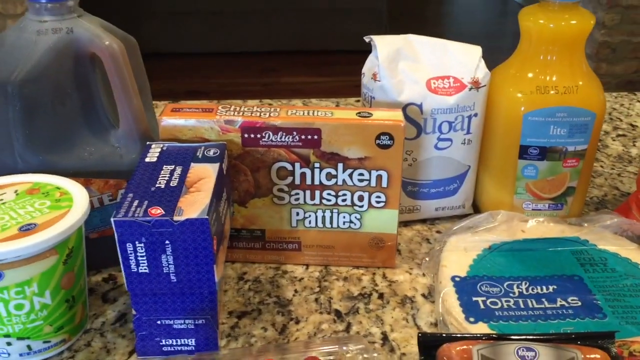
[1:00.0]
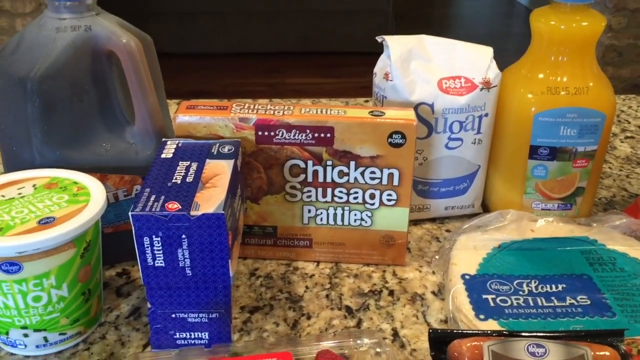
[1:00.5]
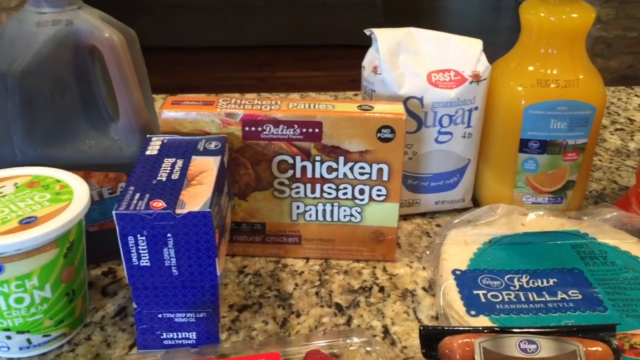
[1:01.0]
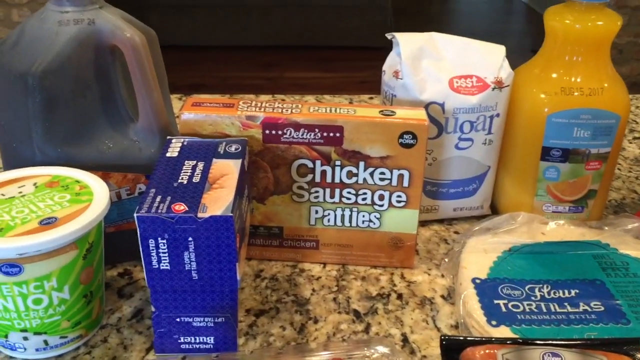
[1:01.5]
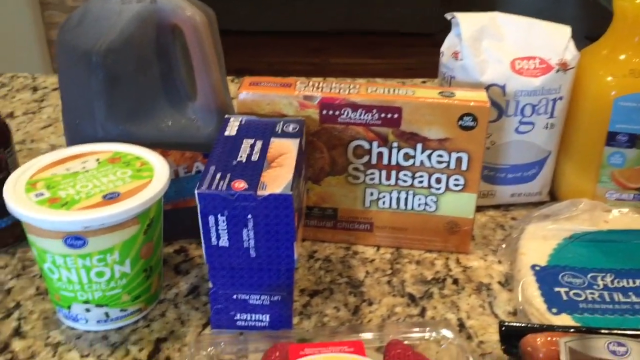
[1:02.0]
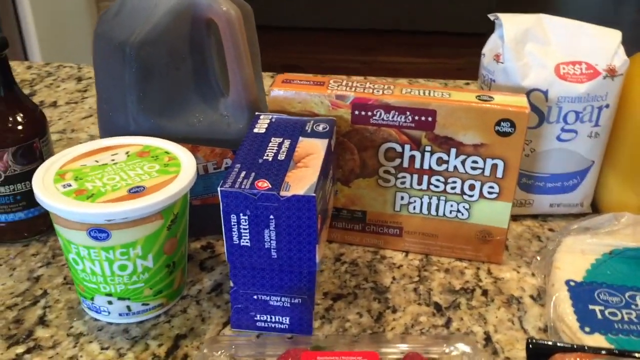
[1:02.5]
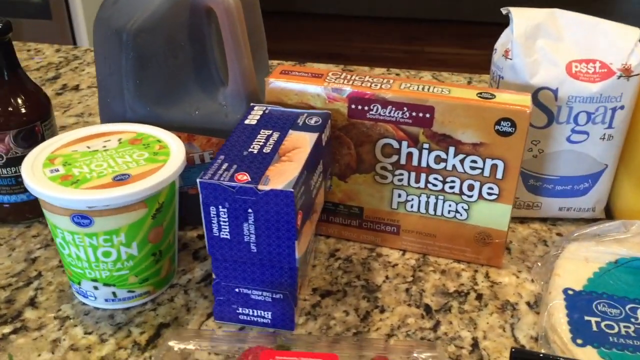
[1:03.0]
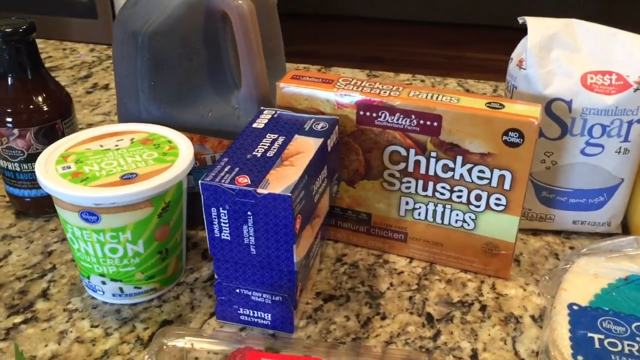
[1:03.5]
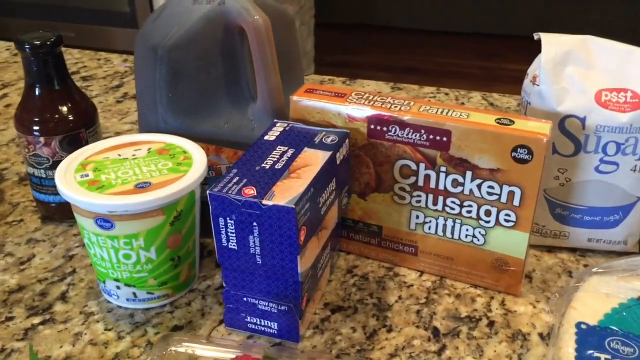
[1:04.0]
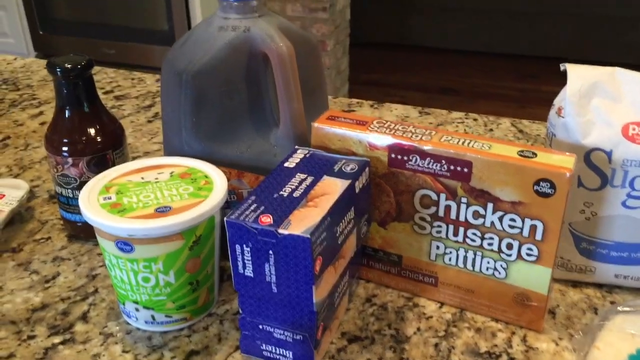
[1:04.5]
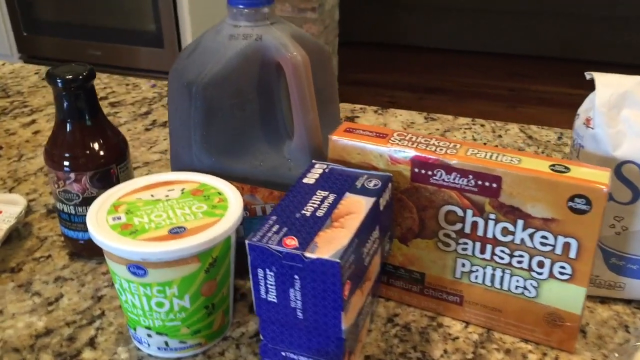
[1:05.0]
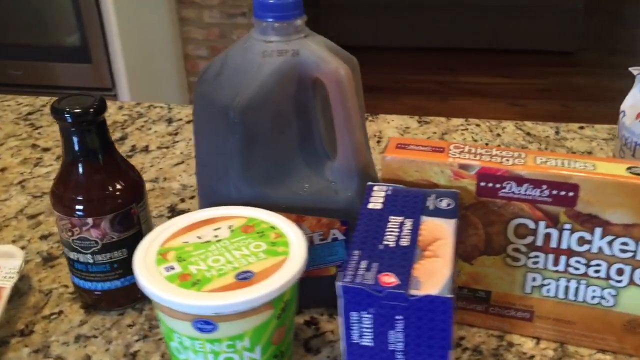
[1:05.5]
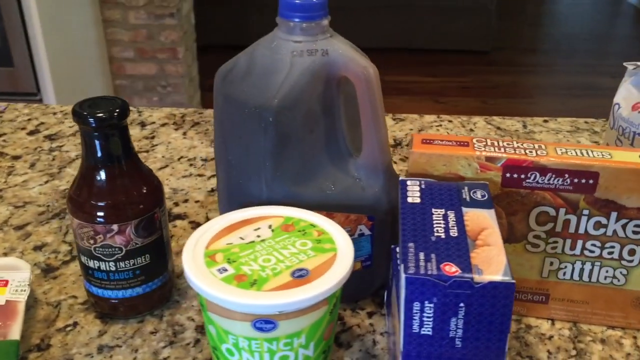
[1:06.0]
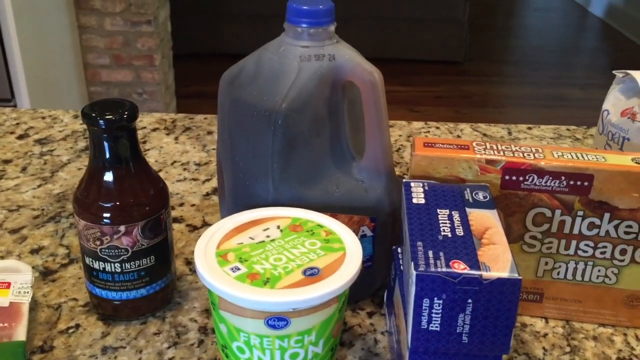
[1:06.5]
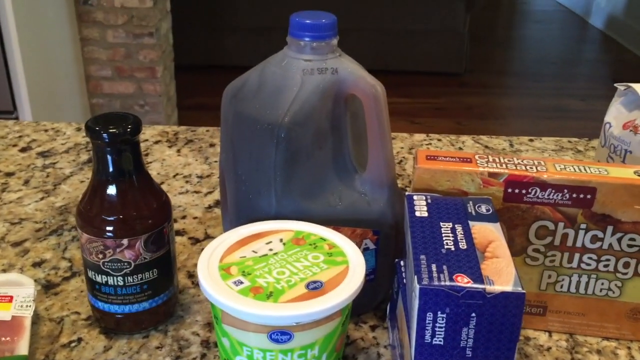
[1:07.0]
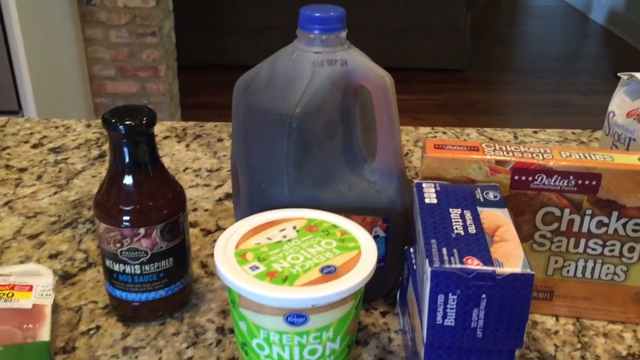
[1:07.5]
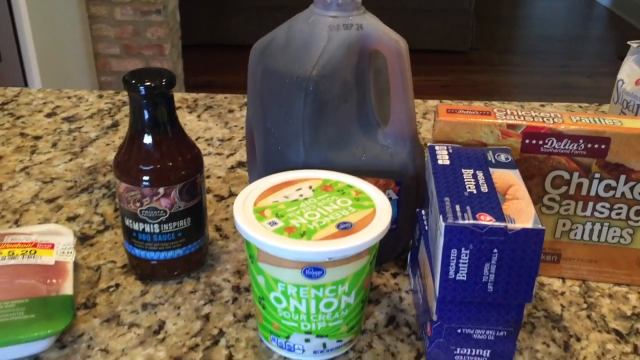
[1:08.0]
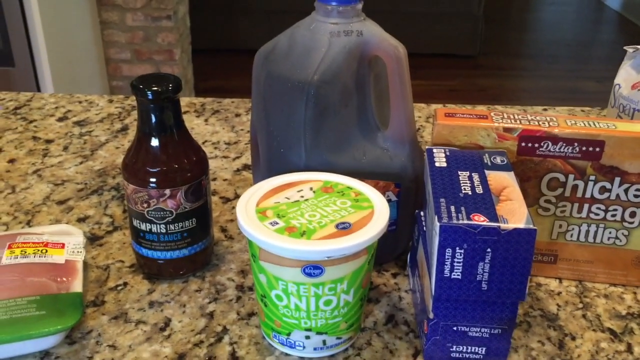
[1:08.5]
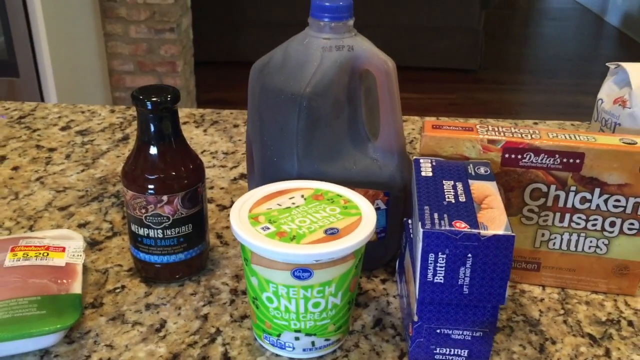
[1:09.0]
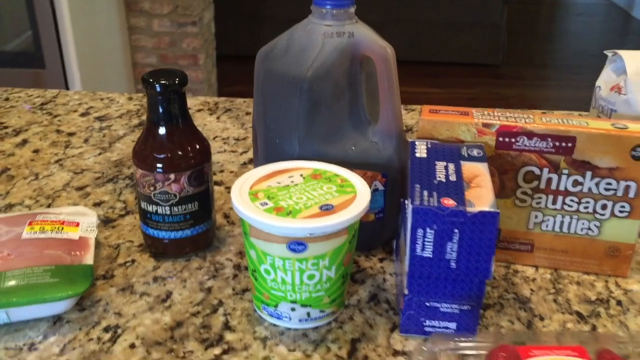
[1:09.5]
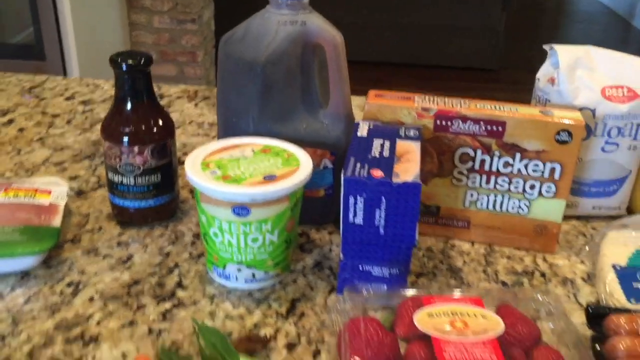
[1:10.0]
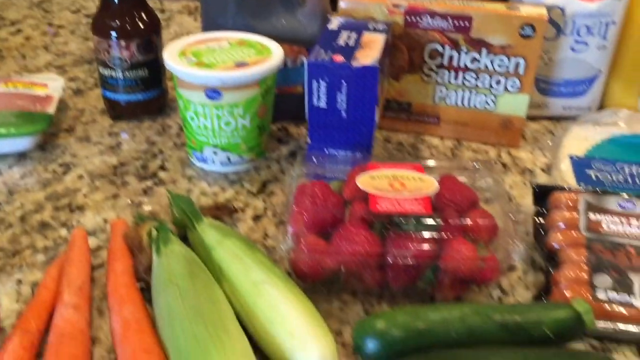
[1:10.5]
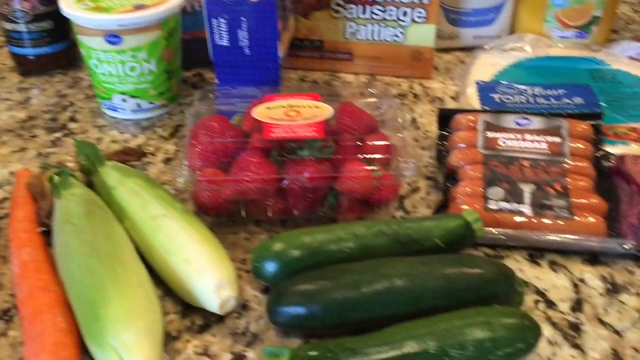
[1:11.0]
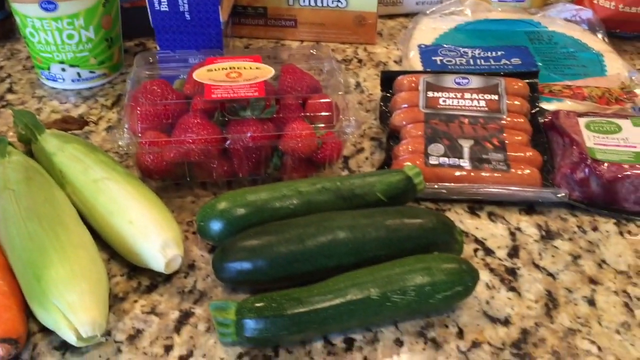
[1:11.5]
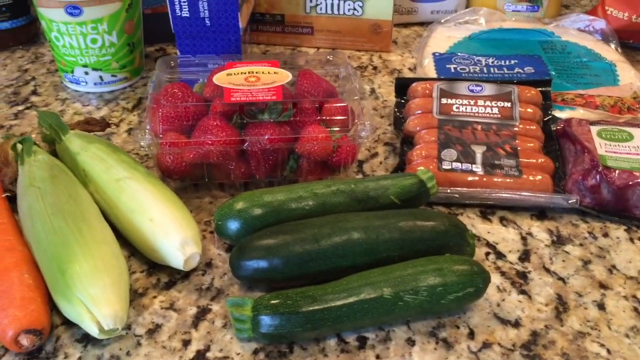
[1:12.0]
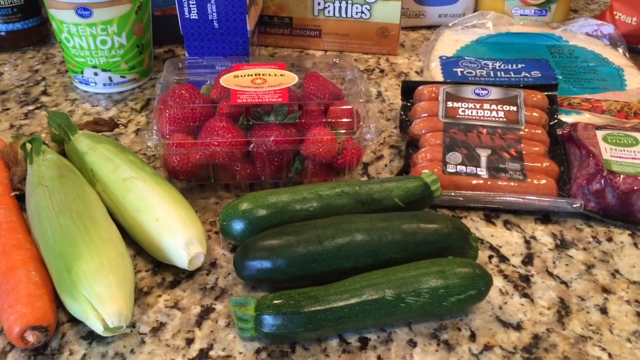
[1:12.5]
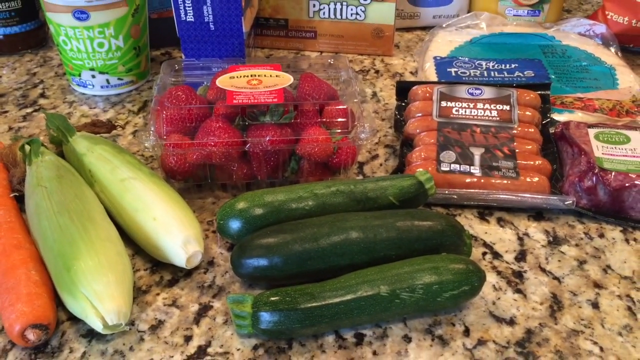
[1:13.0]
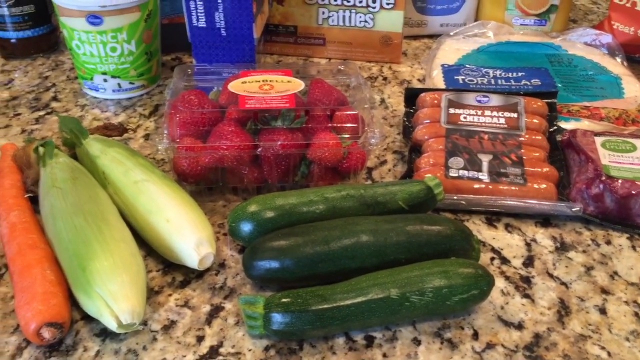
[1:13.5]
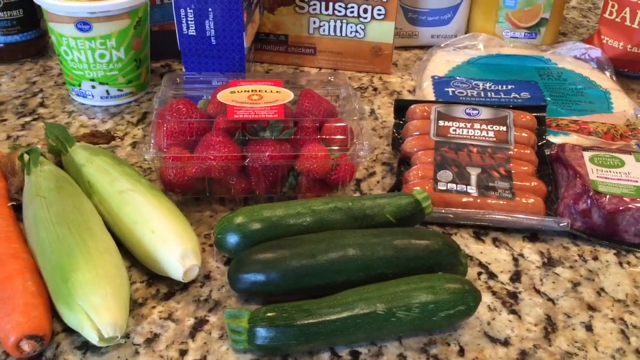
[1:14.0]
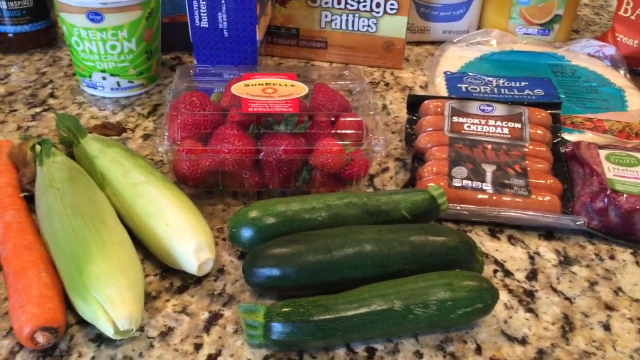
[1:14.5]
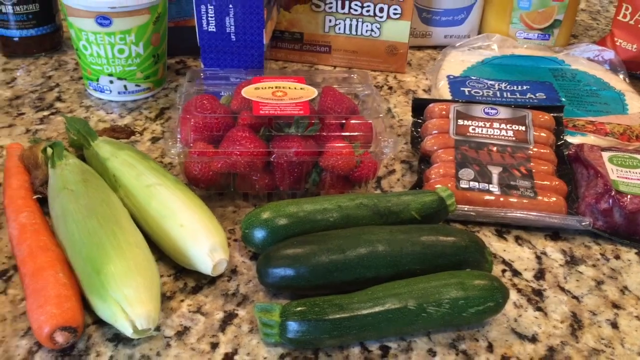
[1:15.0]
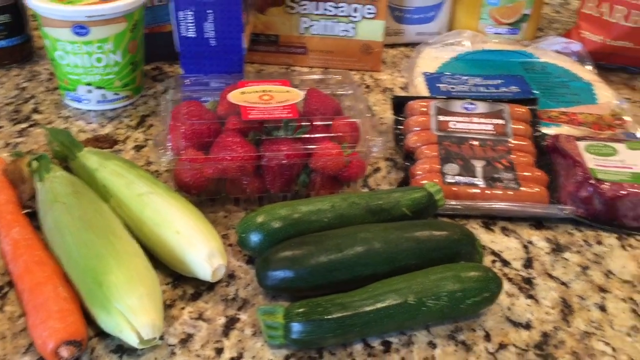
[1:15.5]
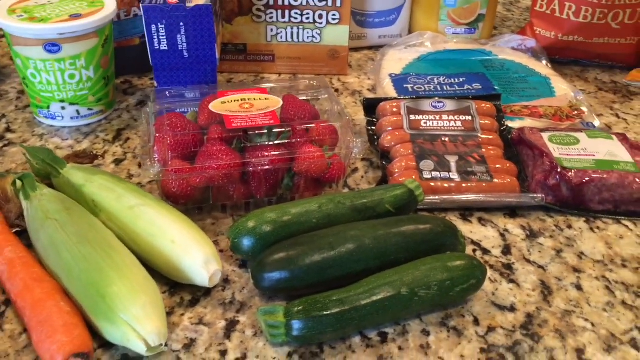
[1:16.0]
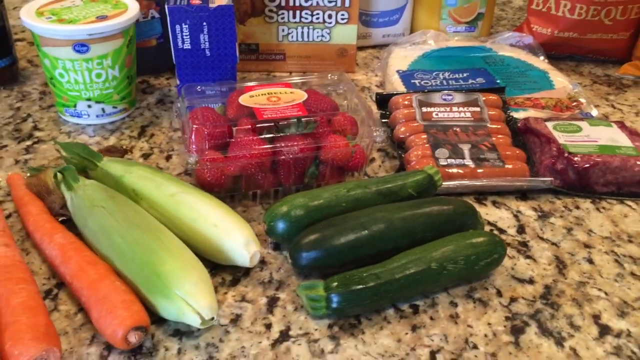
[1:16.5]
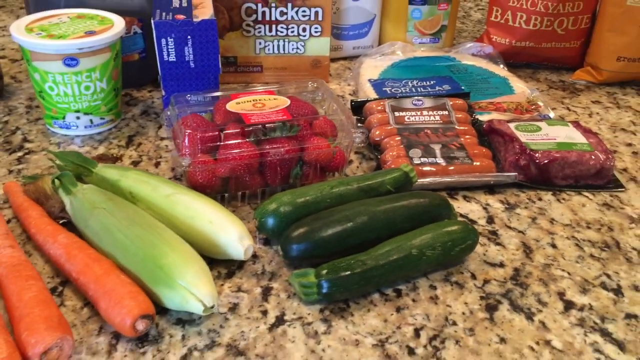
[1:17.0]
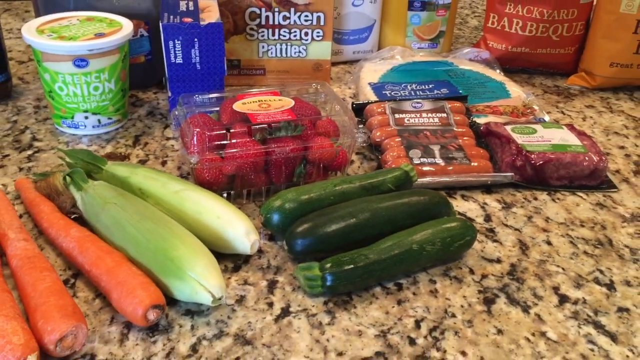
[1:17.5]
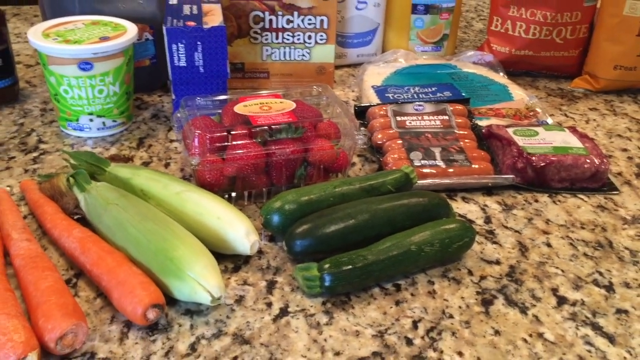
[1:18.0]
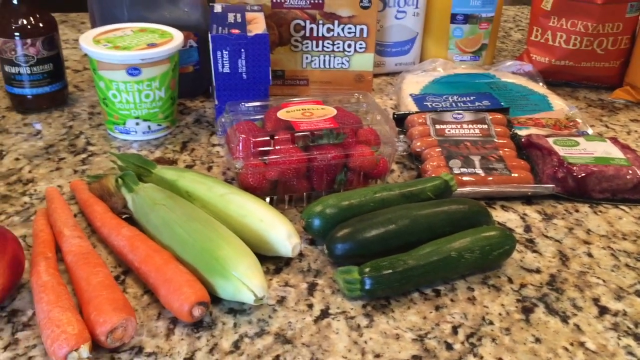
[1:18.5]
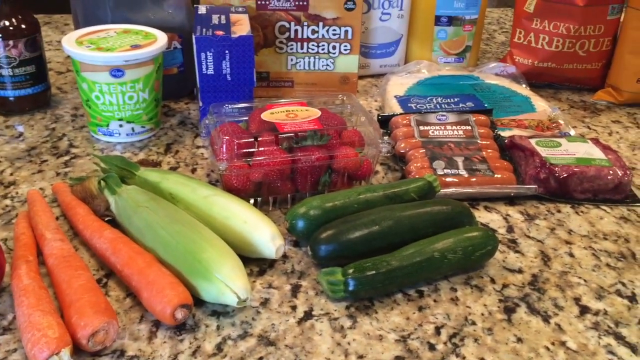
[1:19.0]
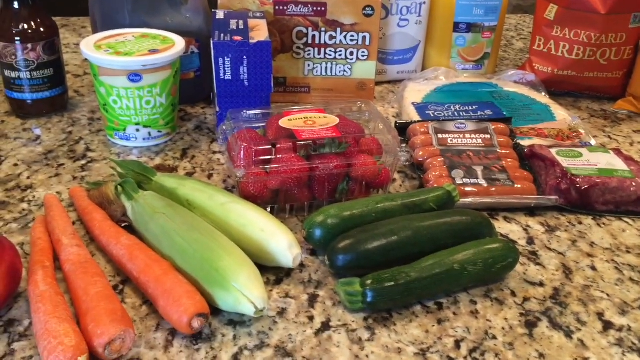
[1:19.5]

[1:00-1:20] The groceries remain on display, with a great many items, and the house looks nice and clean.